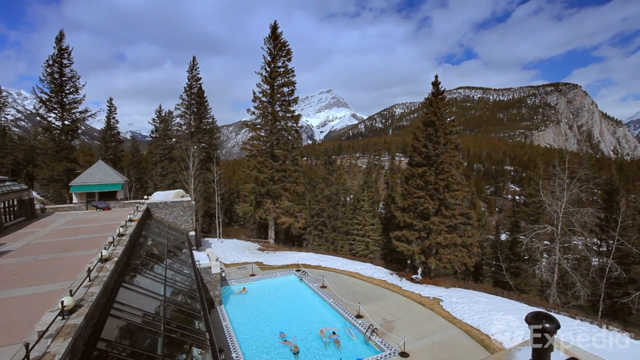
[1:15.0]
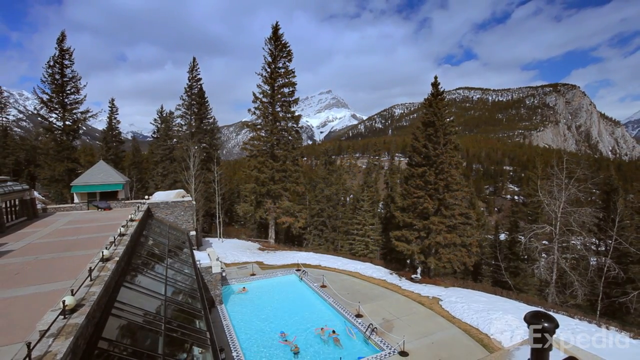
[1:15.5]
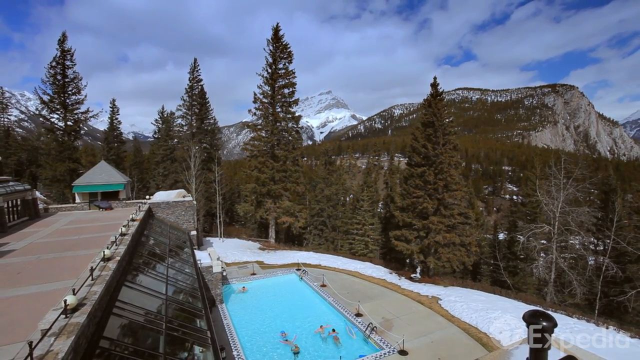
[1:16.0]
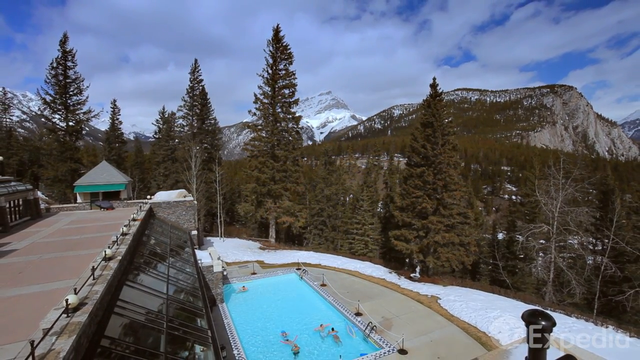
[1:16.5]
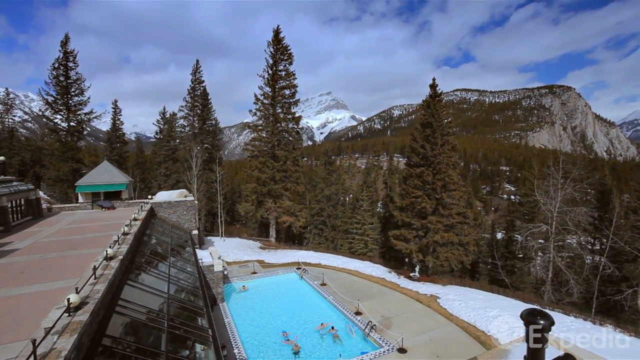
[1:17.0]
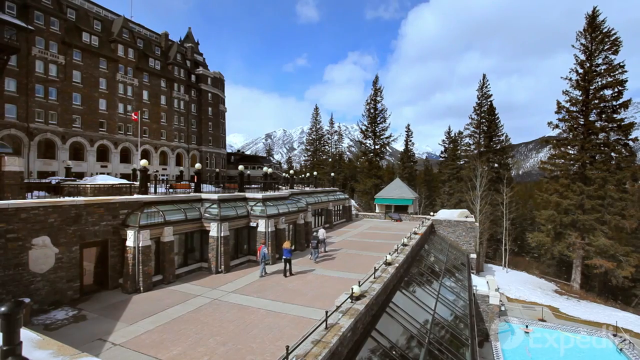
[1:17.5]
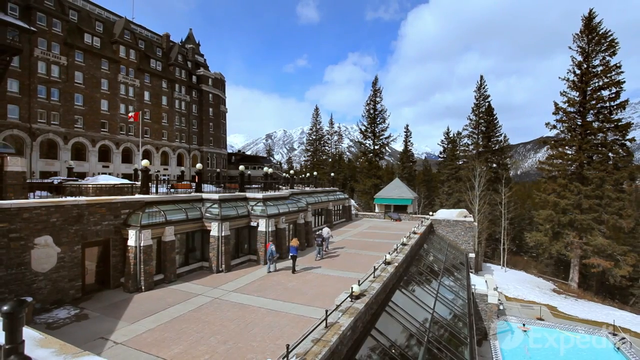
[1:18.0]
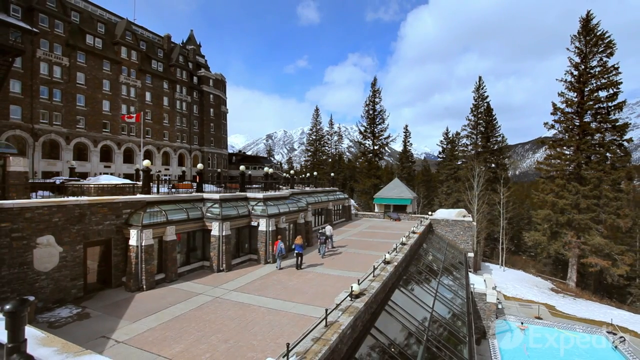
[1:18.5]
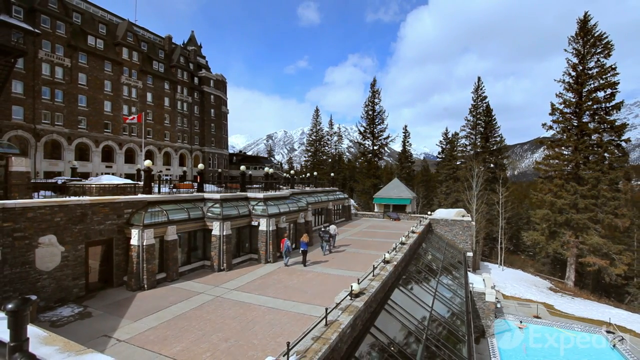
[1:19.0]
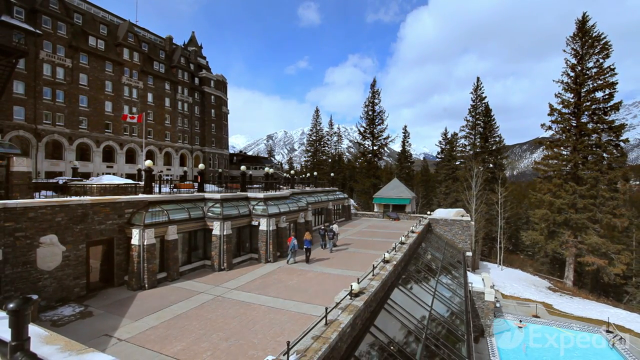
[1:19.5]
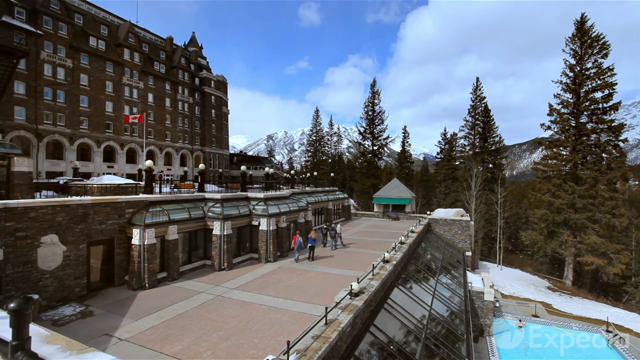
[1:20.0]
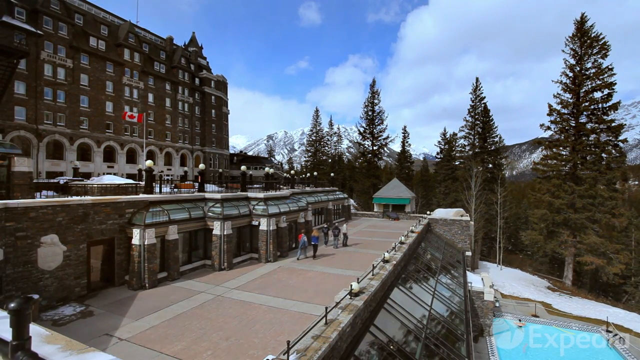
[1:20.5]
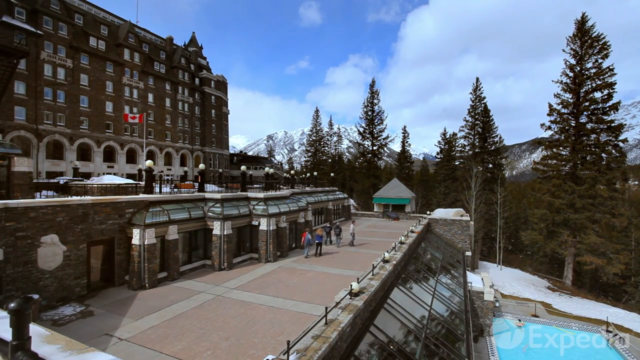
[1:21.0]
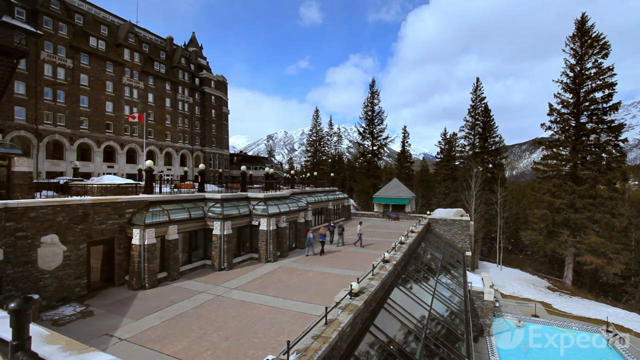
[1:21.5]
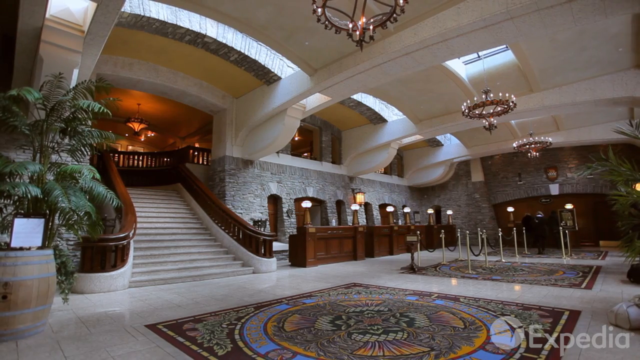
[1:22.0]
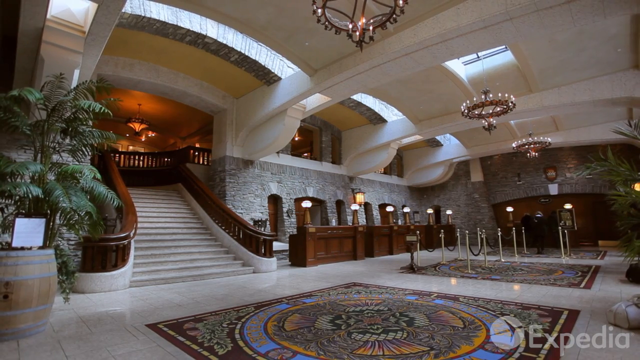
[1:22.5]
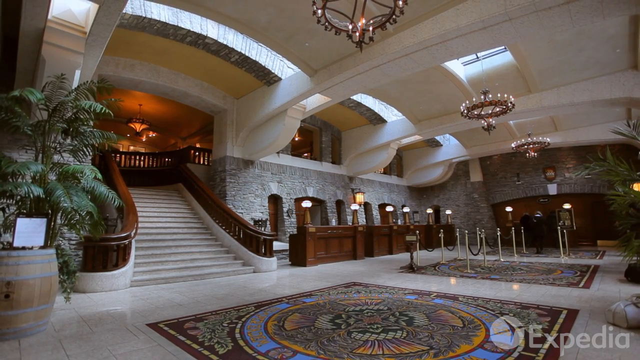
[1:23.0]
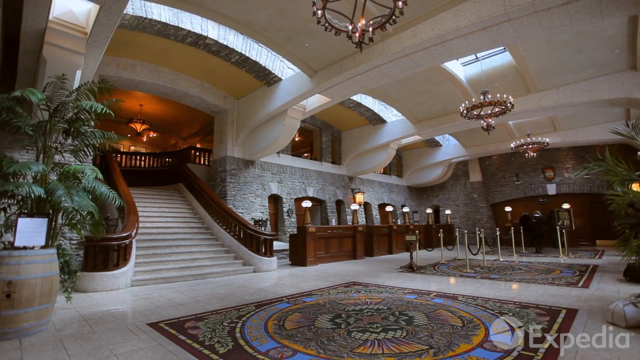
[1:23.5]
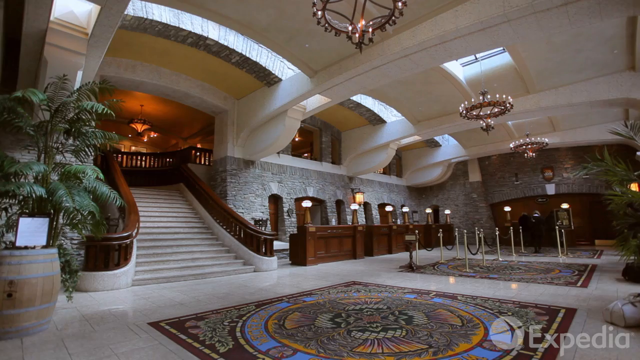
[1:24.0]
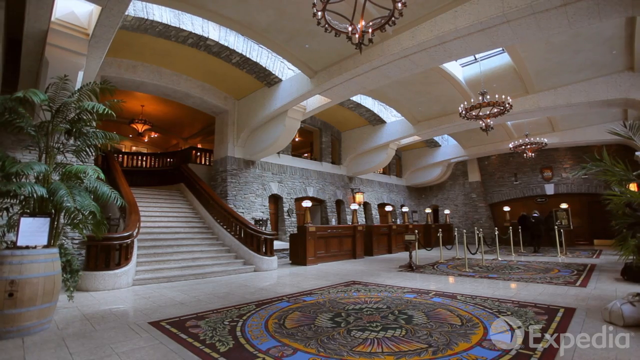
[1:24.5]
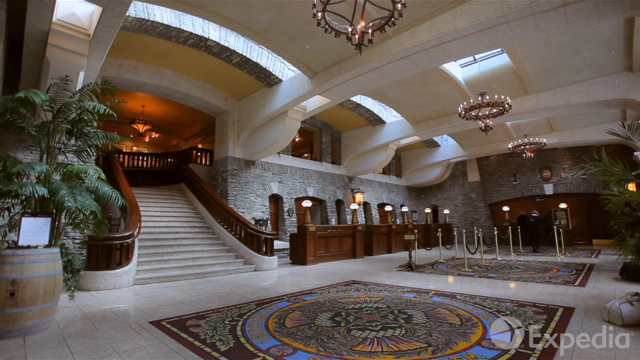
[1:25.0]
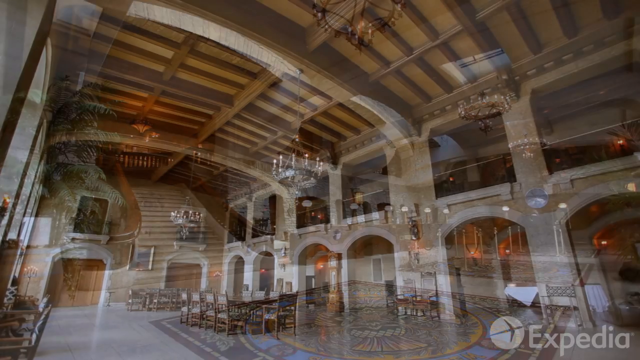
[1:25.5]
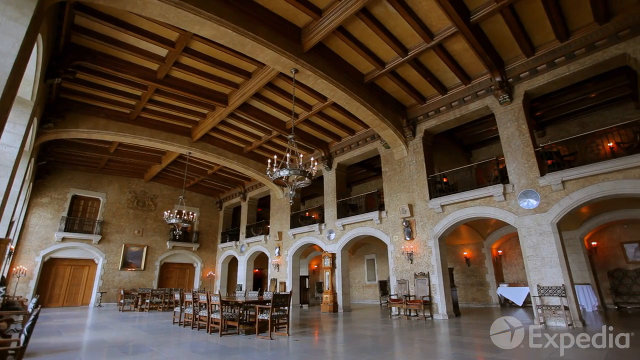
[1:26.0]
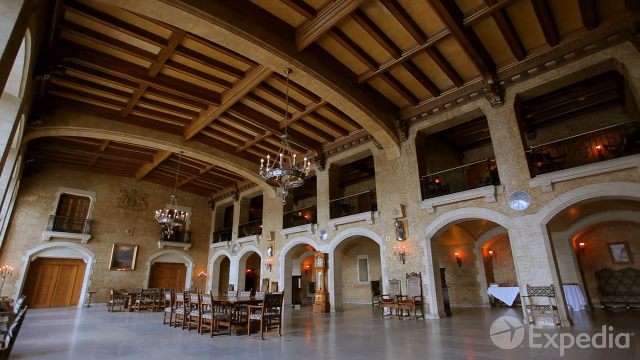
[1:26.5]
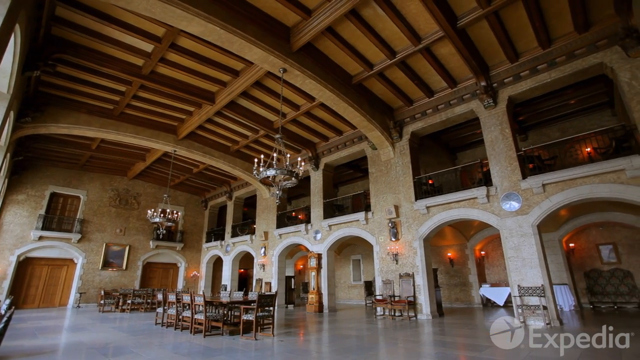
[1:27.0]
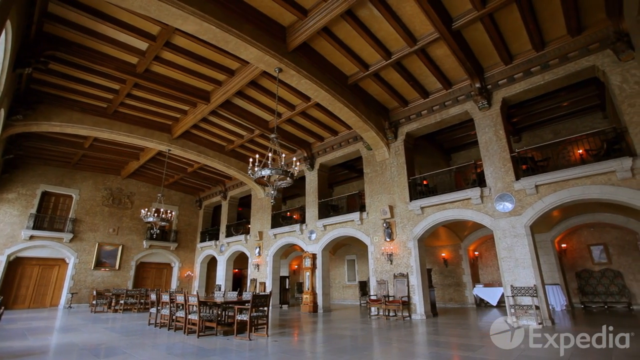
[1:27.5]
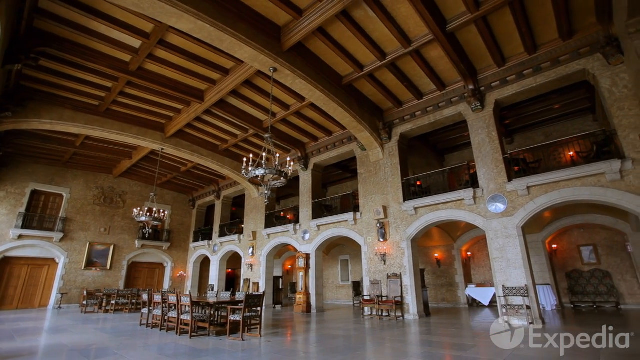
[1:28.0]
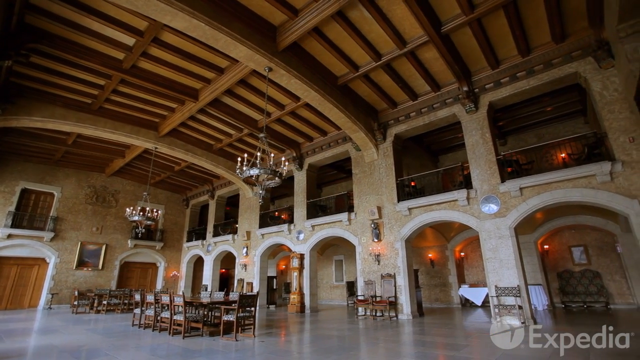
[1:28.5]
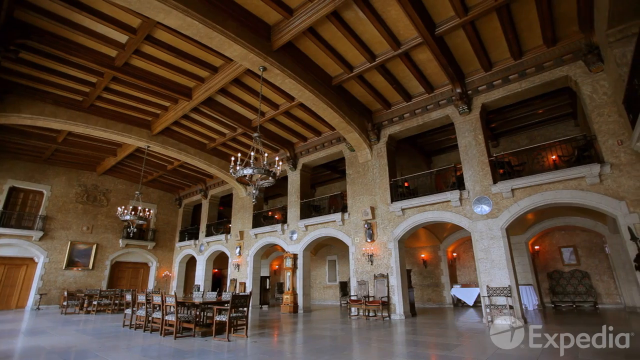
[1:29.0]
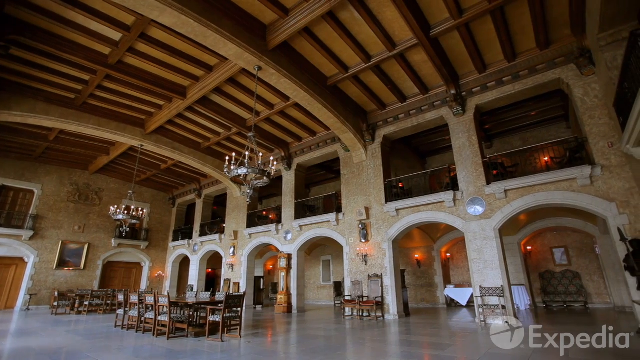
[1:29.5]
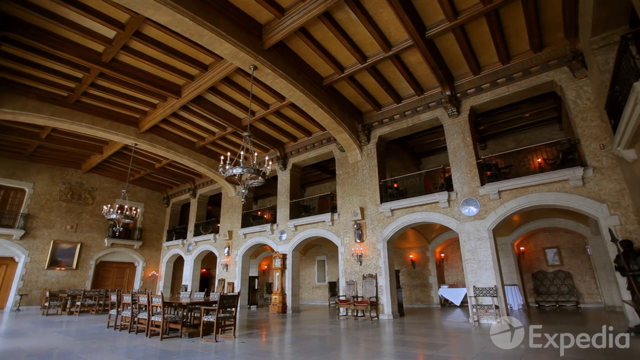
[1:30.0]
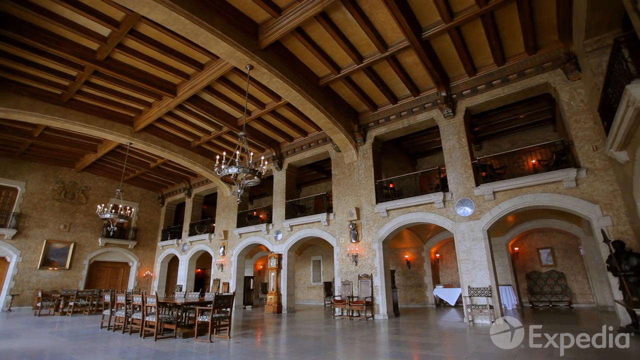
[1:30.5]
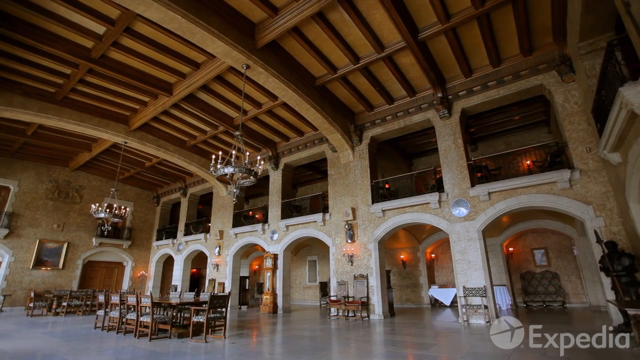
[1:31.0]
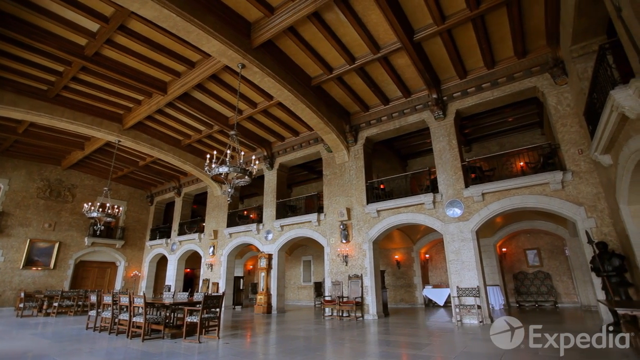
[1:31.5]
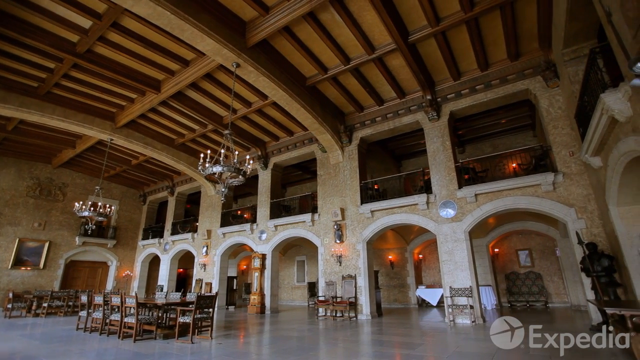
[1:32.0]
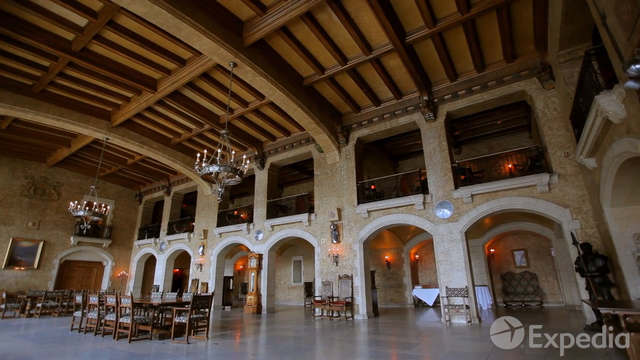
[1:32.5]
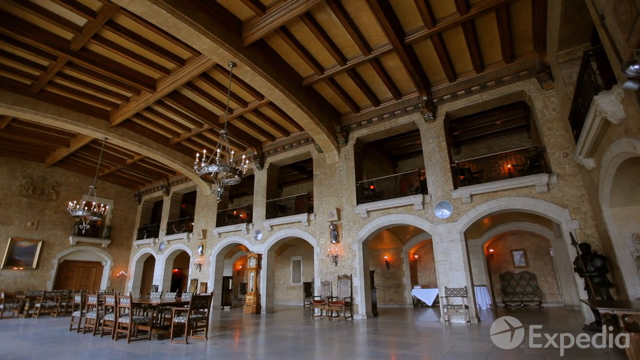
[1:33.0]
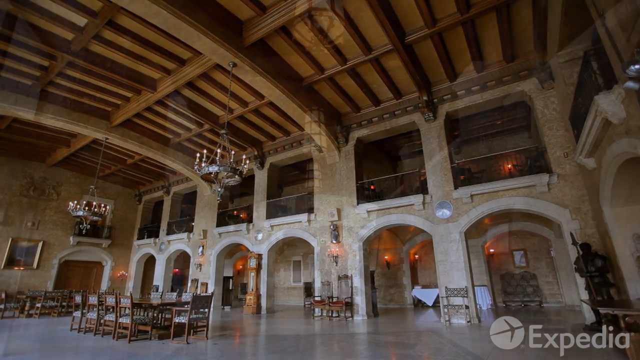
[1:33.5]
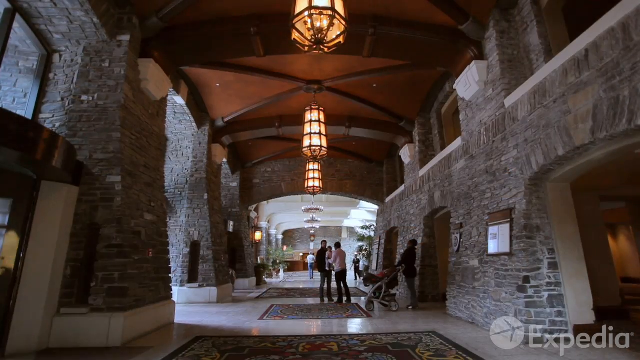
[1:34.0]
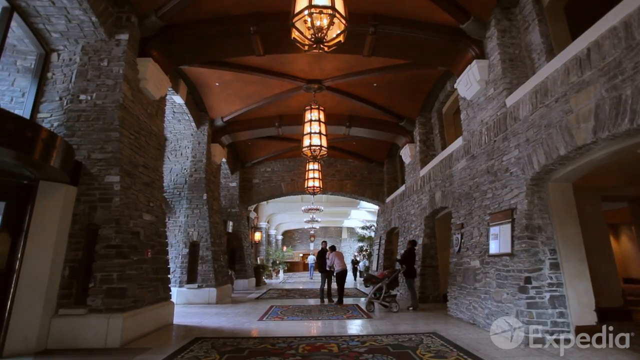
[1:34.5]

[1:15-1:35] A couple of people swim in the swimming pool. In the next shot, some people walk alongside the building, with a Canadian flag flying nearby and trees all around the building. The exterior of the building is made of brick stone, and the pathway looks like concrete and more stone. The next shot is inside the building, which is naturally lit. There is a plant on the left side and a large staircase with wooden handrails. The floors are tile, with decorative flooring in the lobby area, and there are chandeliers and skylights. Another large room has large beams in the ceilings, more chandeliers and large dining tables, plus white tiled archways and balconies on the second floor. The next shot shows another part of the building made of stone, with lights hanging from the ceilings. A couple of people are standing nearby, and someone has a baby stroller.